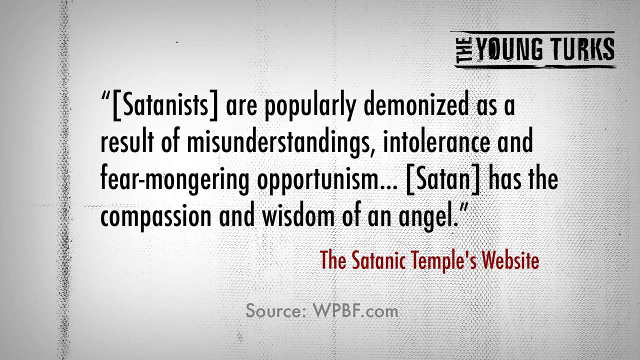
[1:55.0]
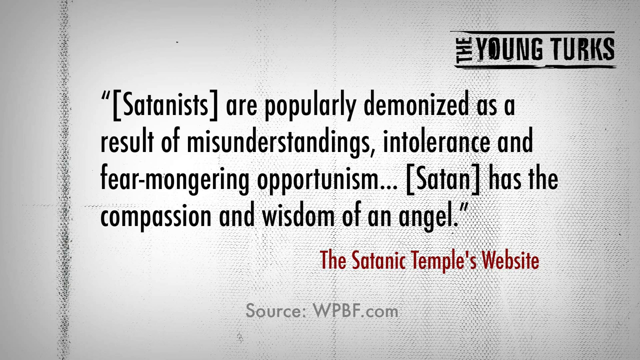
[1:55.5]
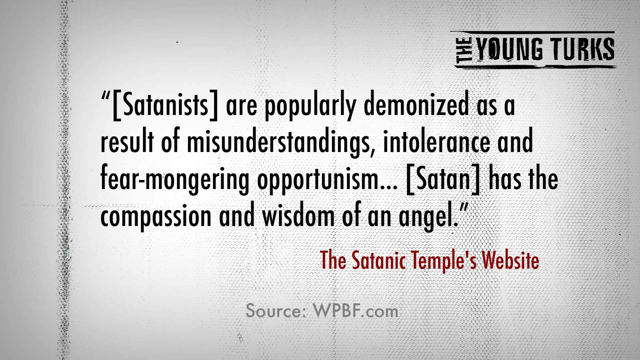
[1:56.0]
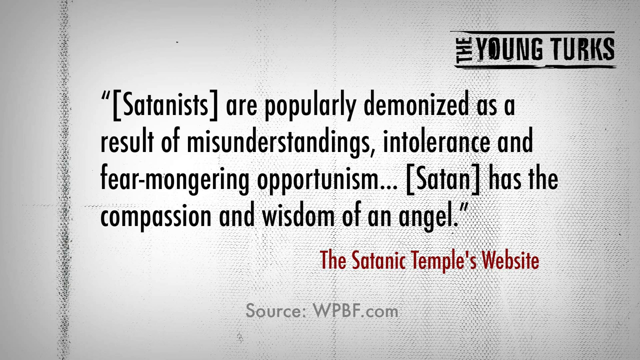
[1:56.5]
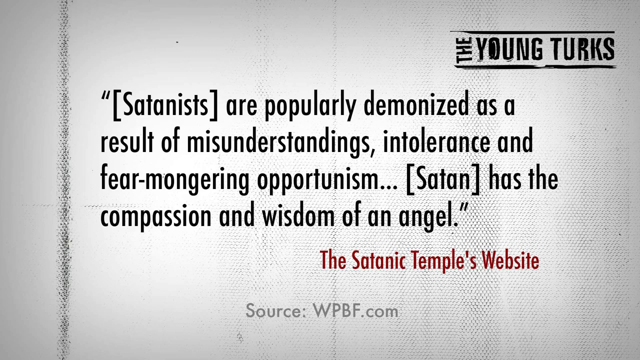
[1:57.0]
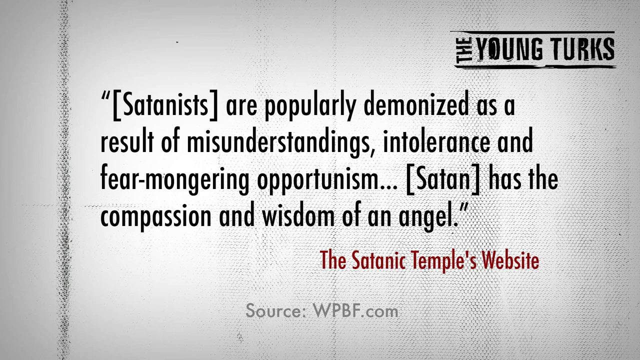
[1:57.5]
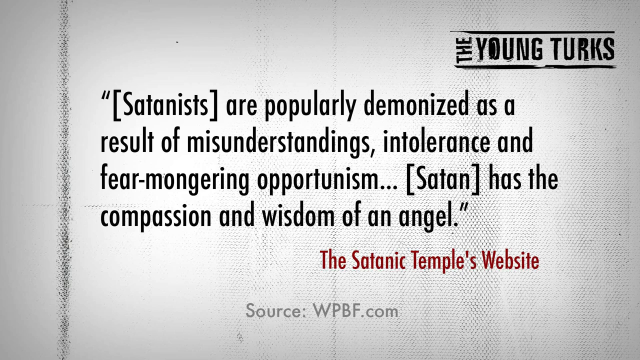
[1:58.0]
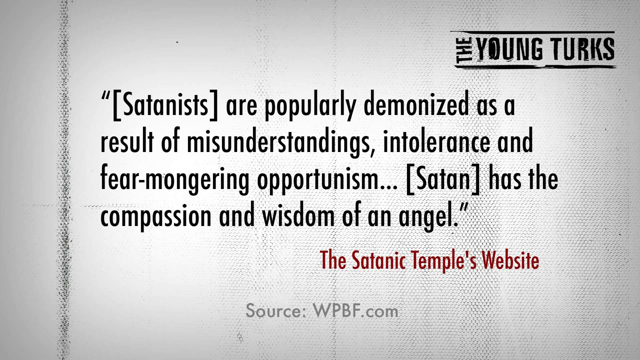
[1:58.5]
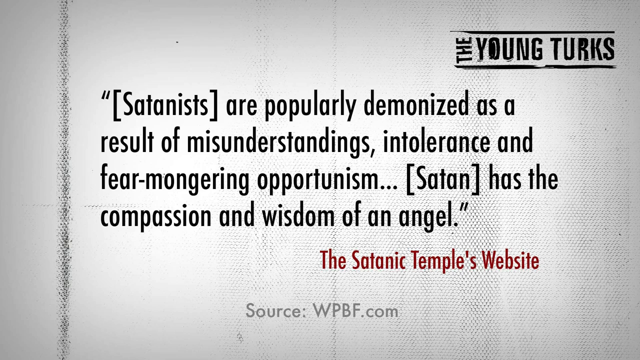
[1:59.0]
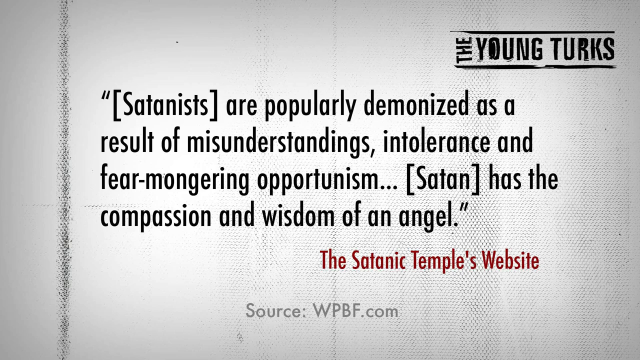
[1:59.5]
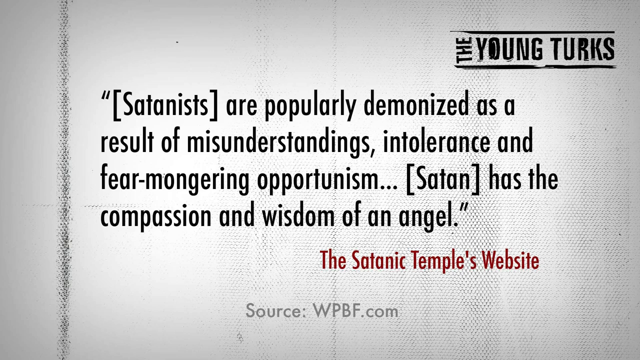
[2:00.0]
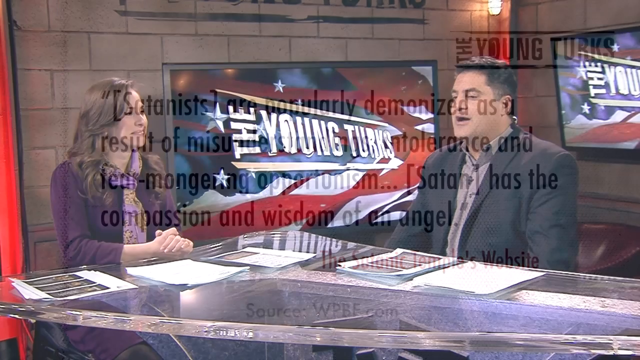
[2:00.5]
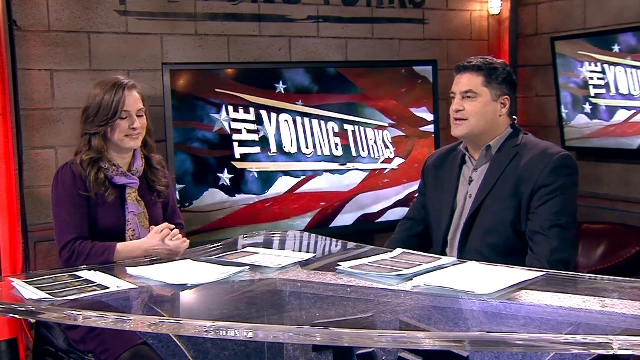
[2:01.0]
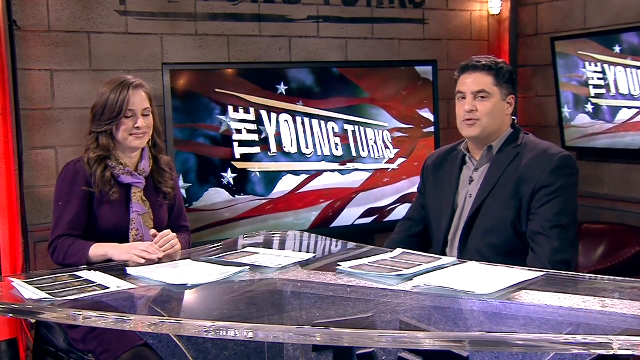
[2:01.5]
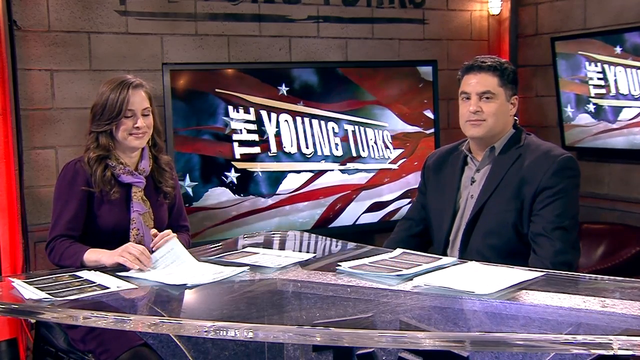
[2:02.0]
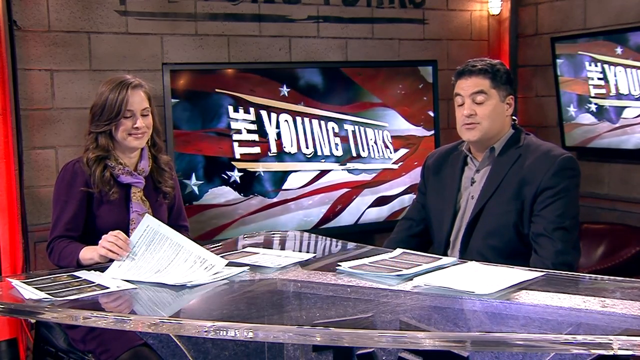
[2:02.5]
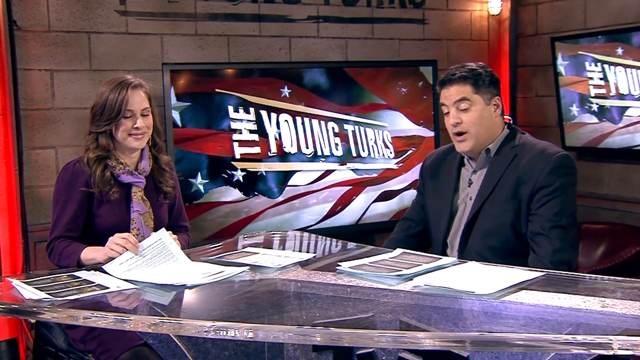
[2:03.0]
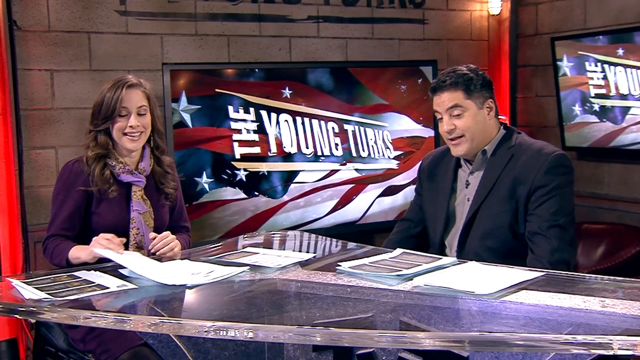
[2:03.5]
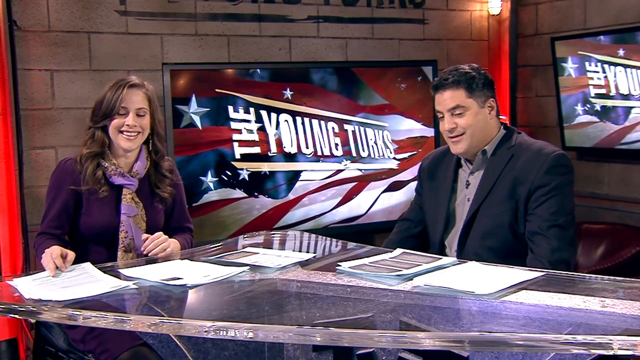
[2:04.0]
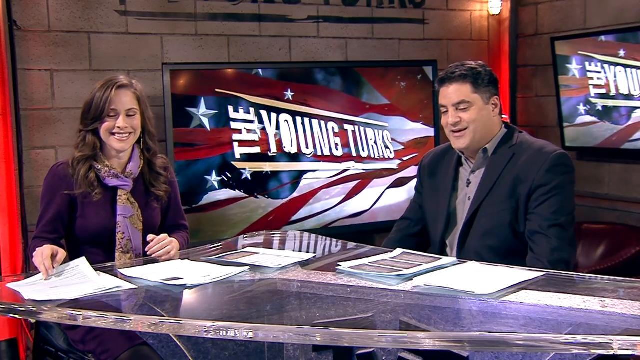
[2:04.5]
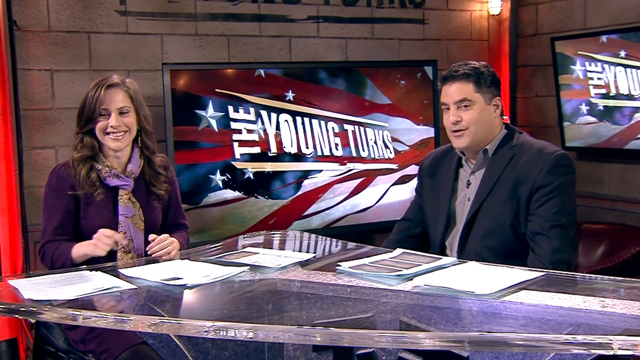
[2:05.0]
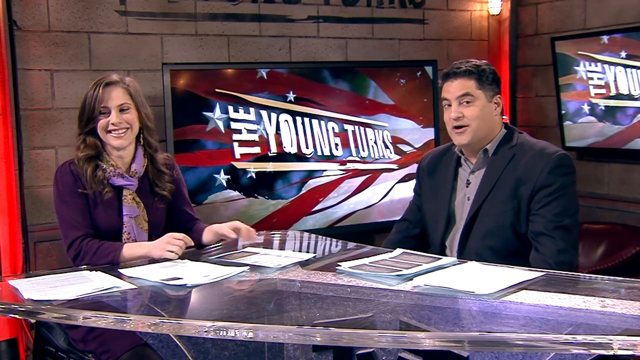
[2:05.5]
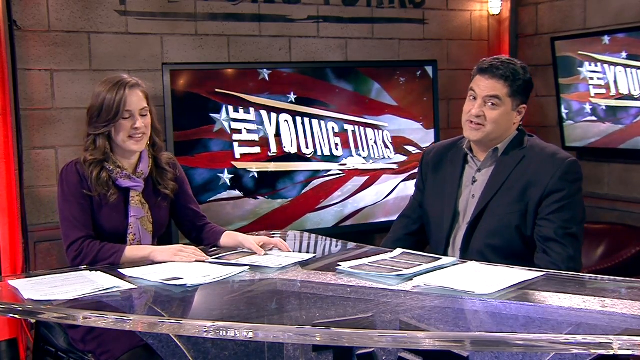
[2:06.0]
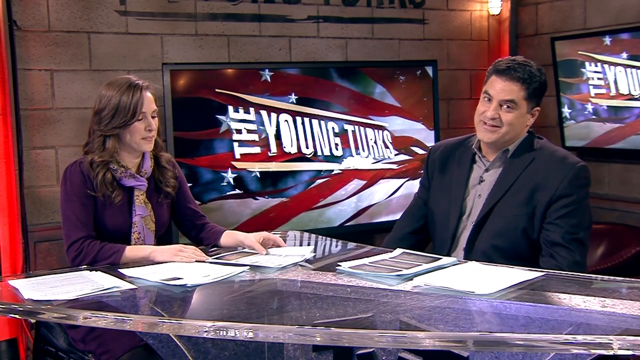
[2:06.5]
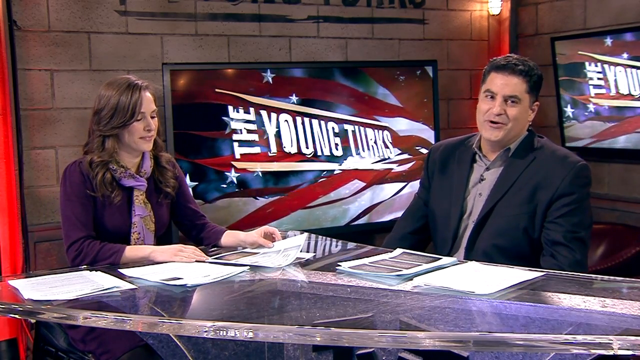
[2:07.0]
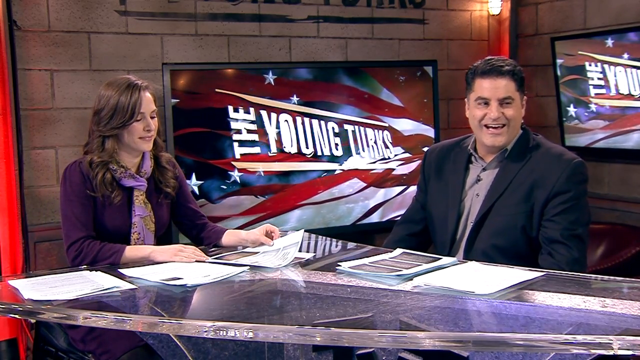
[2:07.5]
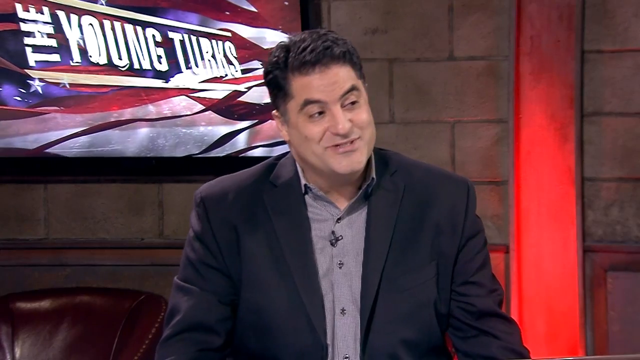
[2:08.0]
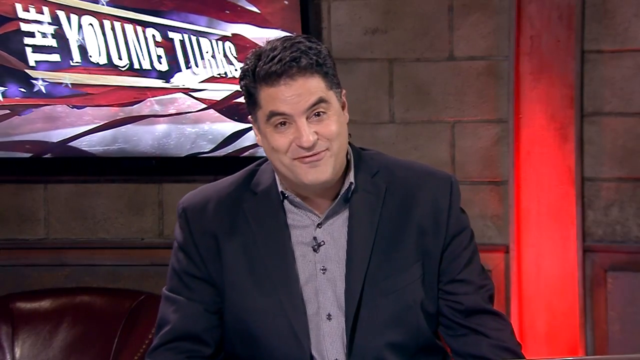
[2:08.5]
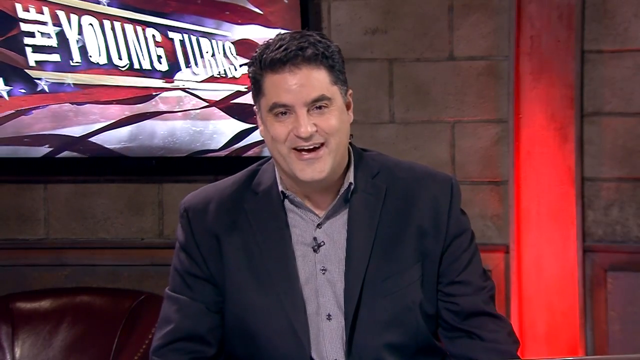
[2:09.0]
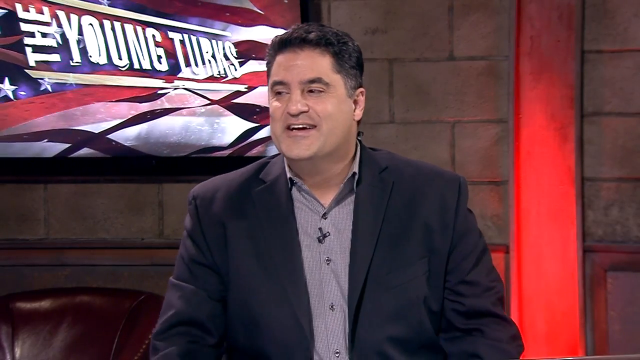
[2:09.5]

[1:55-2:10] A white background with black print reads "Satanists are popularly demonized as a result of misunderstandings, intolerance, and fear-mongering opportunism...Satan has the compassion and wisdom of an angel." Below, in red, it says "the Satanic Temple's website." At the very bottom, in light gray, it says "Source WPBF.com", and "The Young Turks" appears in the top right. The video then goes to the two reporters in the newsroom with the light brick background, the main TV in the middle reading "The Young Turks" with the moving American flag graphic behind it, and, on the right, part of a TV that is sort of diagonal on the wall. The female reporter is on the left in a dark purple sweater with a light purple scarf around her neck printed with gold emblems of some kind; she has dark brown hair worn down and is smiling a bit. On the right is the male reporter in a dark blazer worn open over a gray button-up shirt, with darker hair. The two talk, the woman moves her papers over, and both smile and somewhat laugh as they talk.